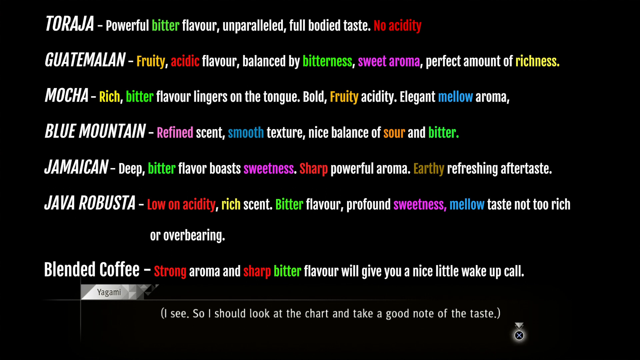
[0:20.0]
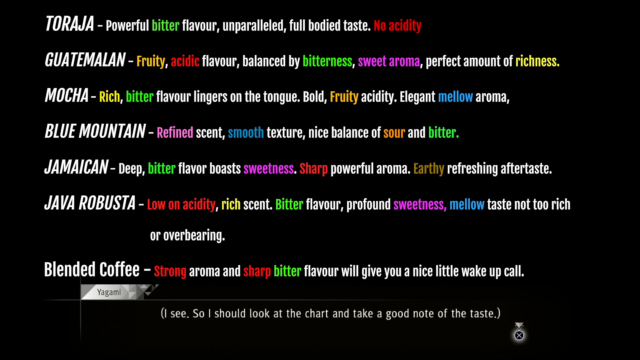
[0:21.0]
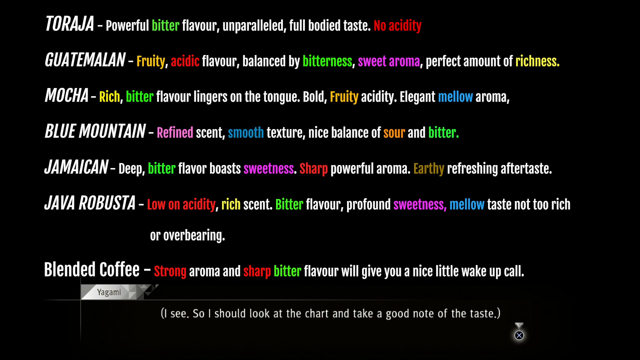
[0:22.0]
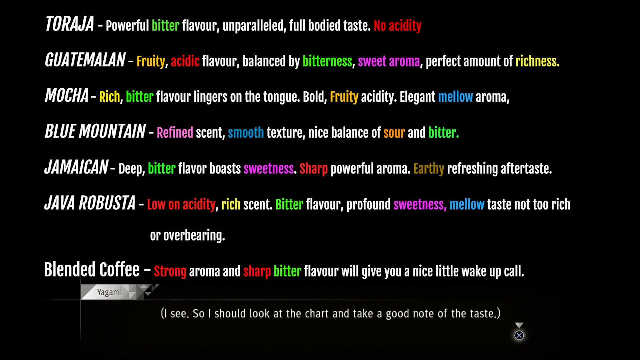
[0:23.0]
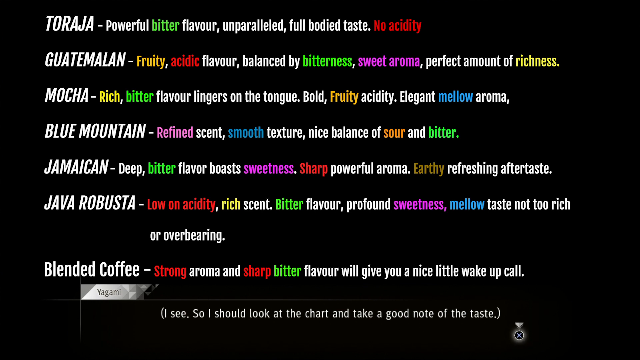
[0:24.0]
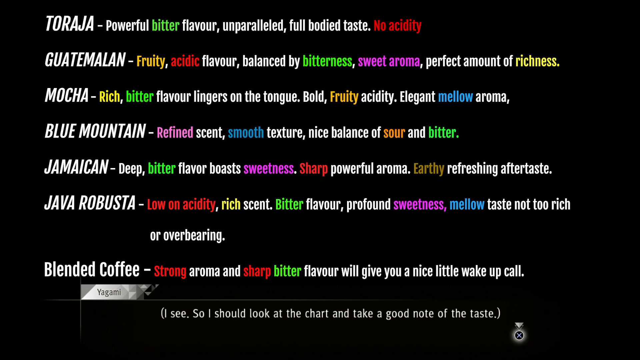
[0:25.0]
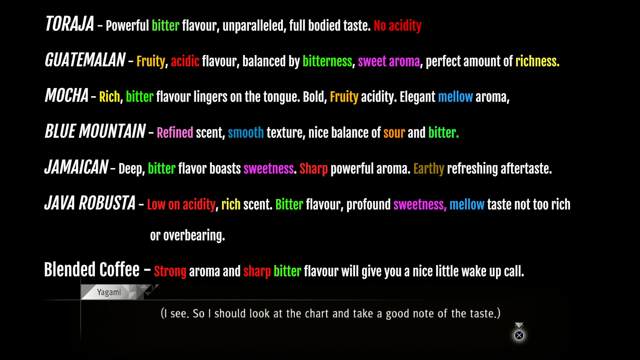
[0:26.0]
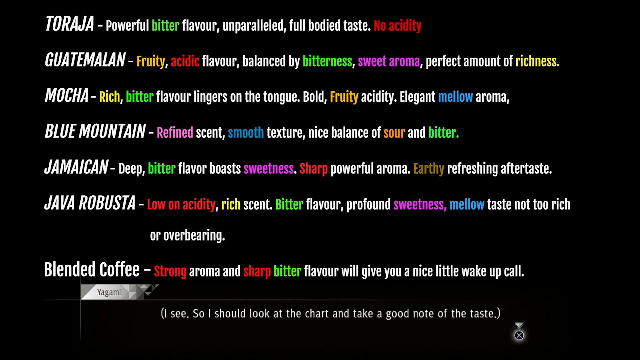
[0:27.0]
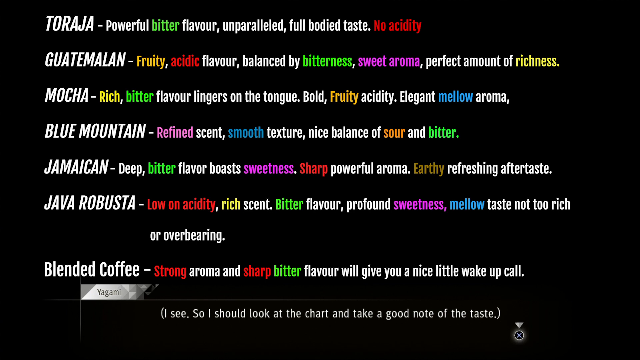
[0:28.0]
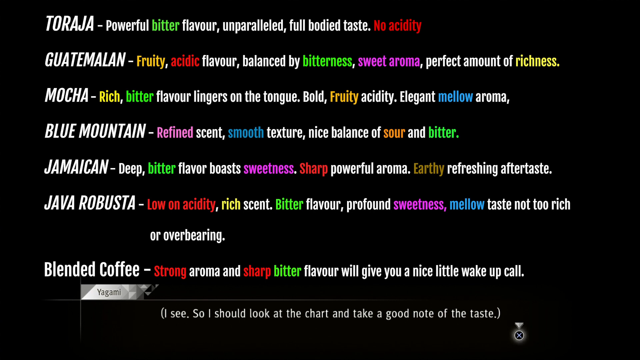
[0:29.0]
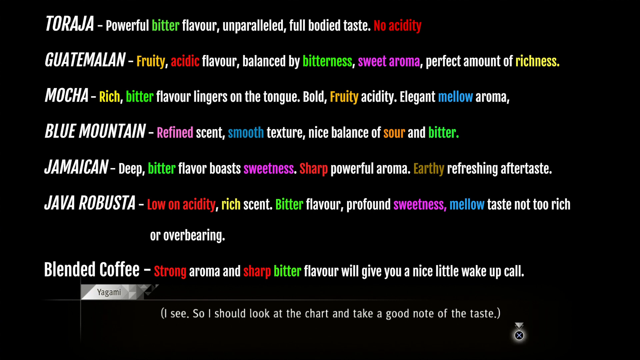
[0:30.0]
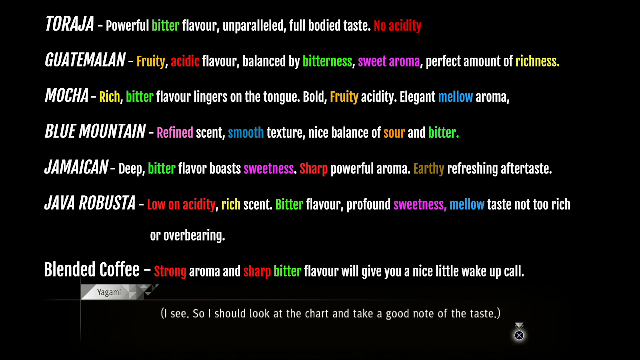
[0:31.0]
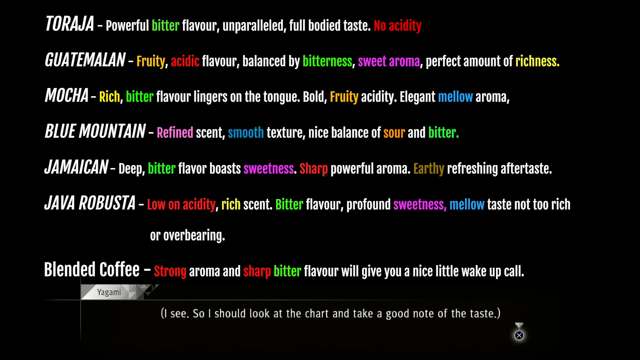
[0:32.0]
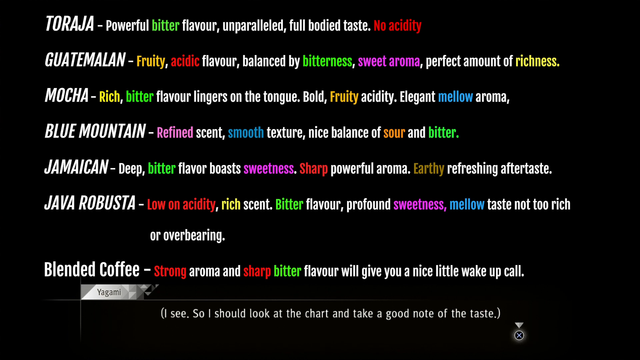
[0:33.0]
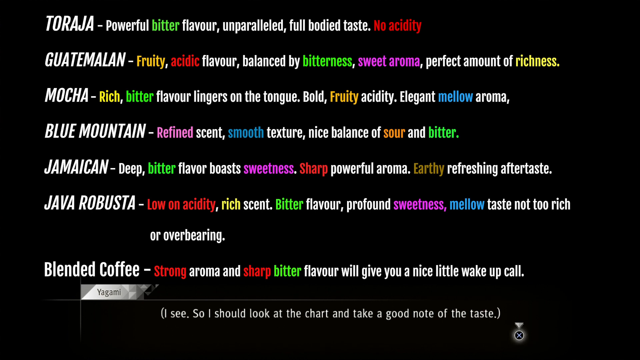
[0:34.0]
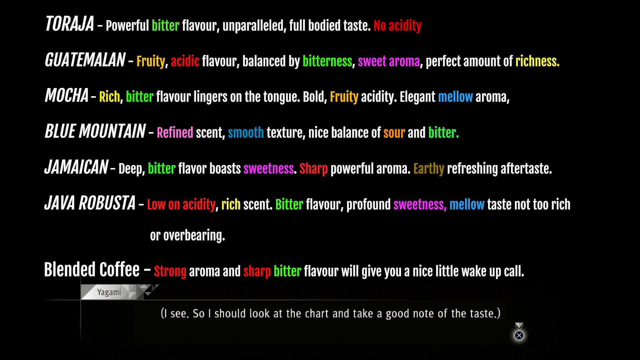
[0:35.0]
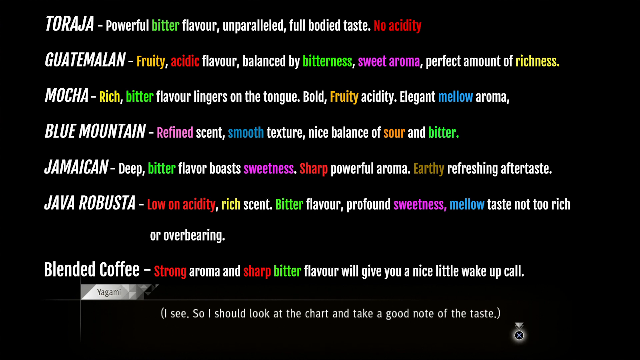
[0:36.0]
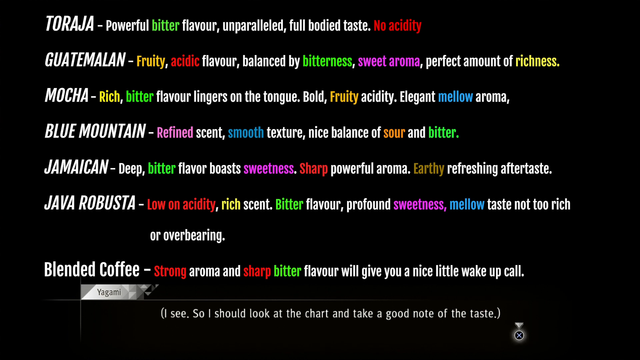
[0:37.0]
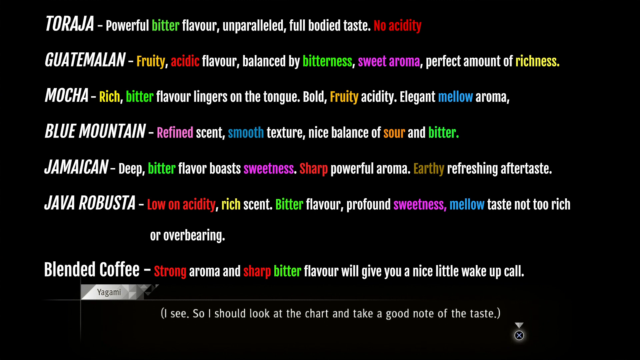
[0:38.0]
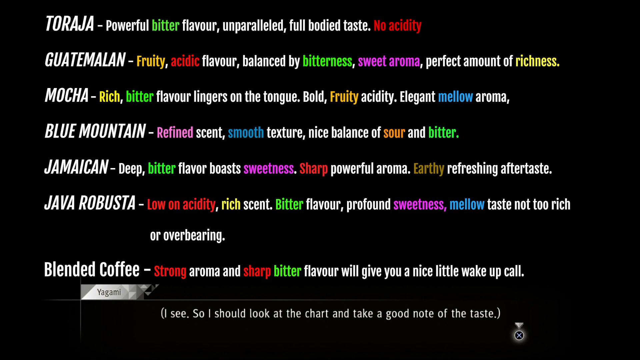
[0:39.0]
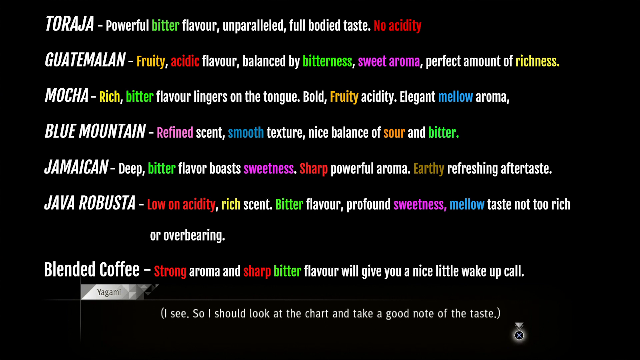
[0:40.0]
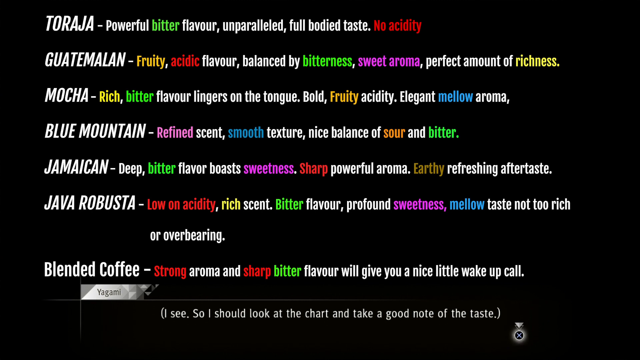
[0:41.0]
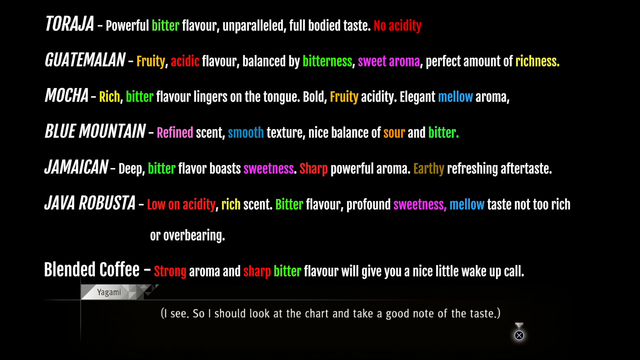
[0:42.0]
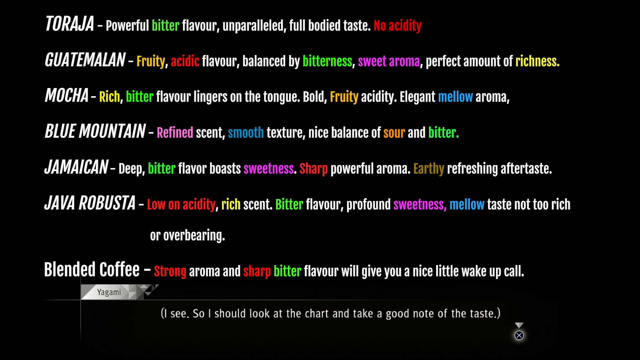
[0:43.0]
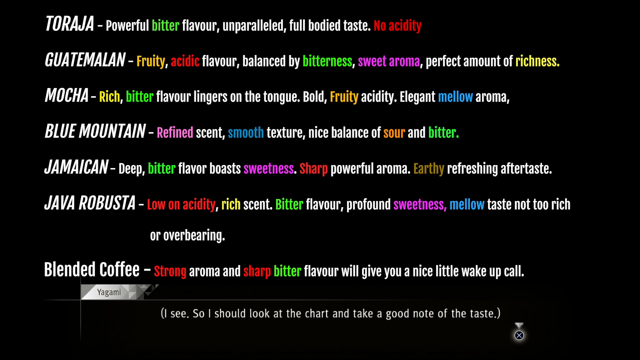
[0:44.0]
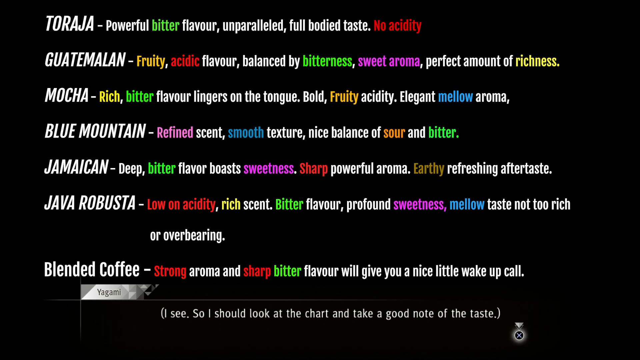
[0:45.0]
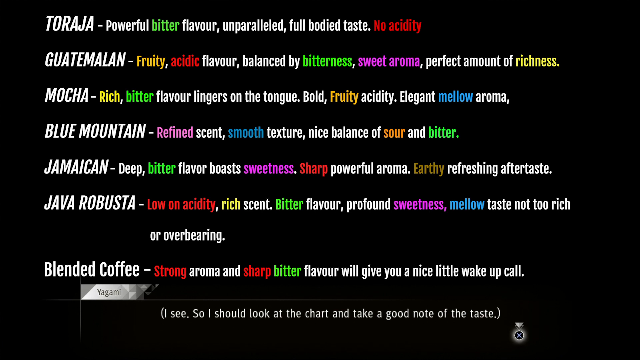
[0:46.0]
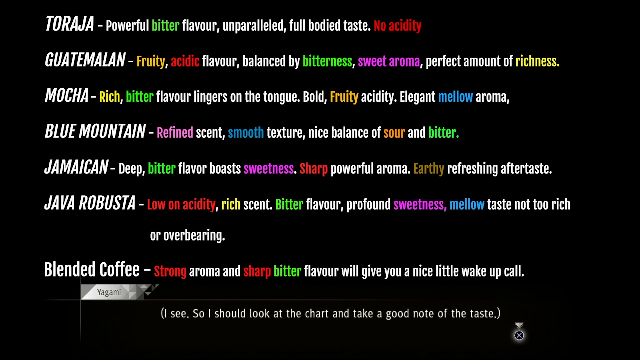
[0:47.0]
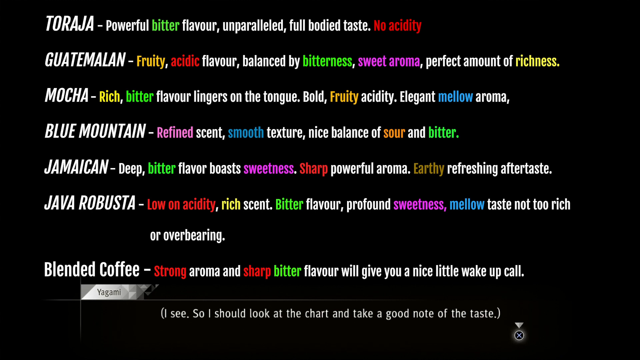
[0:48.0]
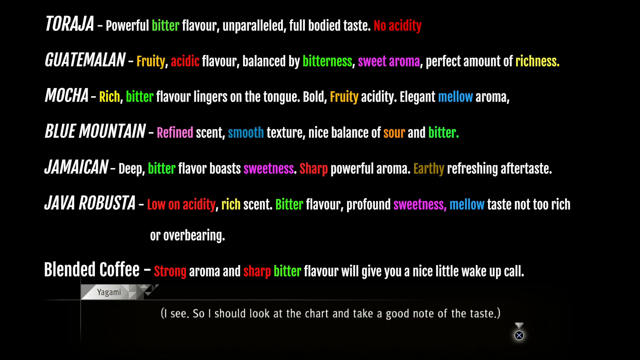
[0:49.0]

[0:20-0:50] A menu shows several different types of coffee on a black background, with the names of the coffees in white text. The first name is Toraja, and next to it the text reads "powerful, bitter flavor, unparalleled, full-bodied taste, no acidity." Below that is Guatemalan, with "fruity, acidic flavor balanced by bitterness, sweet aroma, perfect amount of richness." Below that is Mocha: "rich, bitter flavor, lingers on the tongue, bold, fruity, acidity, elegant, mellow aroma." Next is Blue Mountain: "refined scent, smooth texture, nice balance of sour and bitter." Below that is Jamaican: "deep, bitter flavor, boasts sweetness, sharp, powerful aroma, earthy, refreshing aftertaste." Below that is Java Robusta: "low on acidity, rich scent, bitter flavor, profound sweetness, mellow taste, not too rich or overbearing." Below that is blended coffee: "strong aroma, and sharp, bitter flavor will give you a nice little wake-up call." Certain words in the descriptions are shown in color to emphasize different aspects of each coffee's flavor.